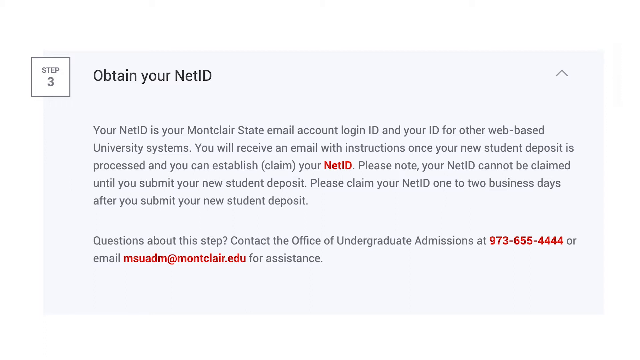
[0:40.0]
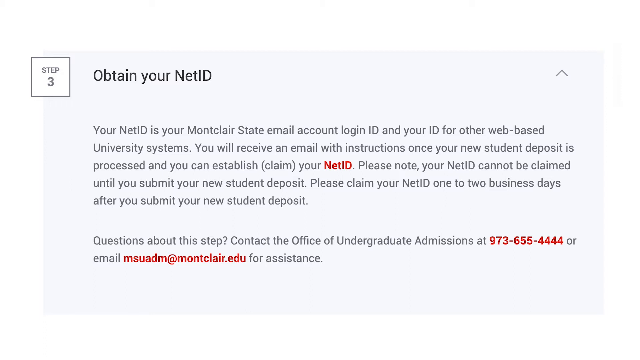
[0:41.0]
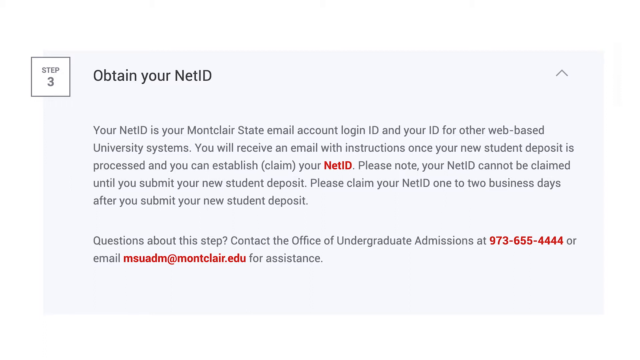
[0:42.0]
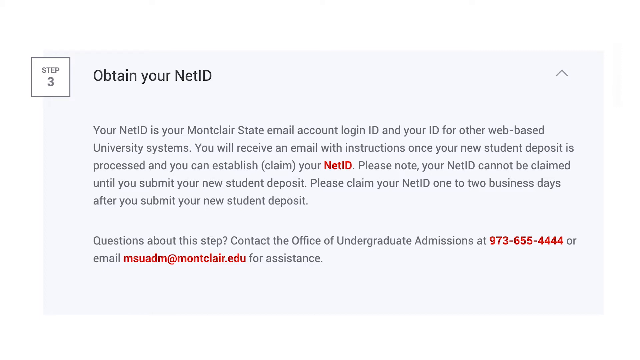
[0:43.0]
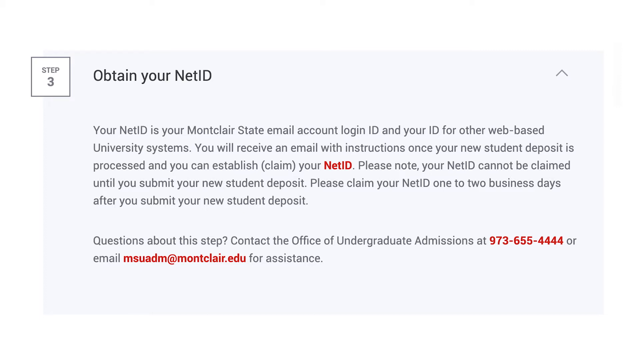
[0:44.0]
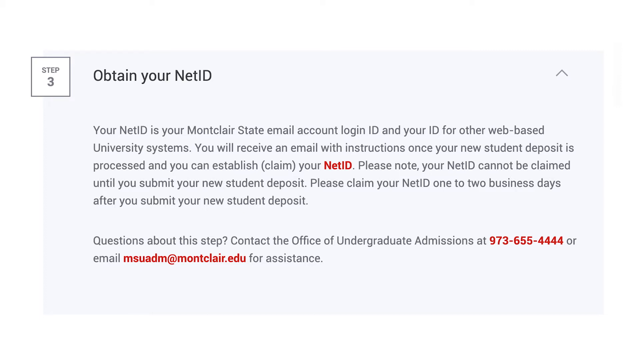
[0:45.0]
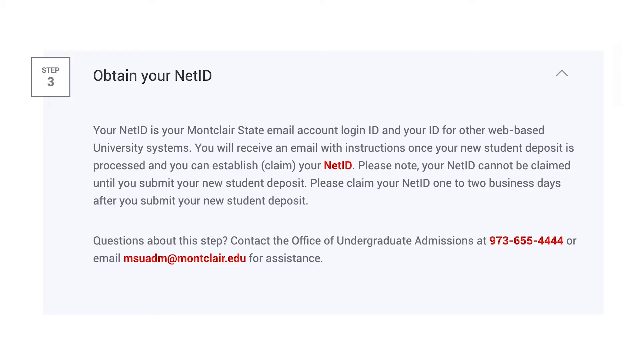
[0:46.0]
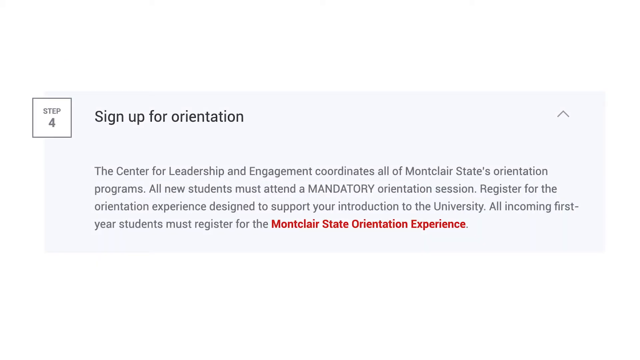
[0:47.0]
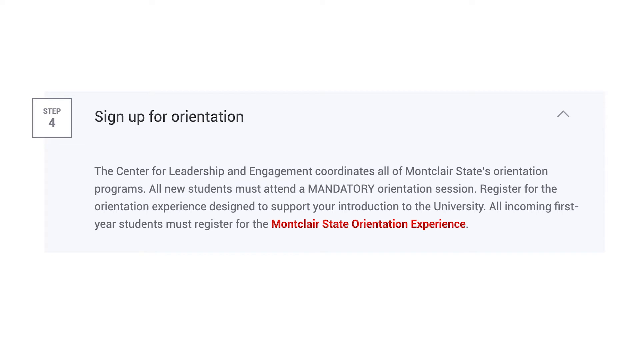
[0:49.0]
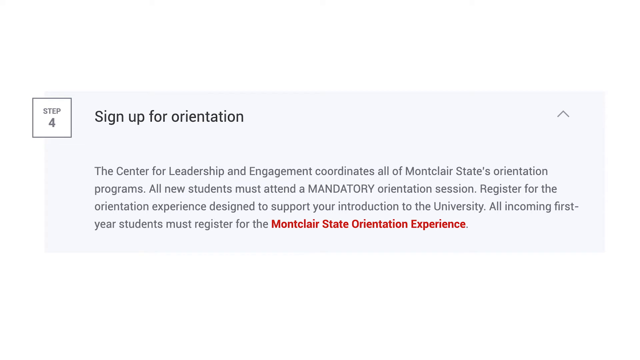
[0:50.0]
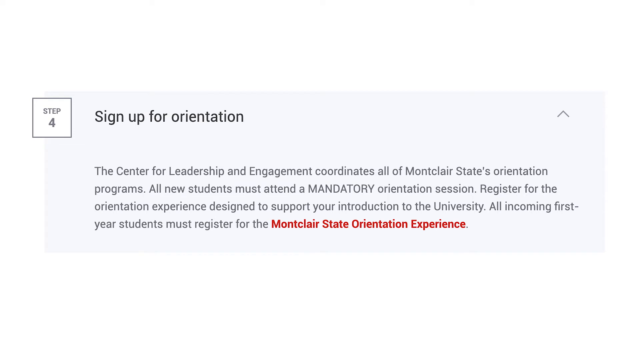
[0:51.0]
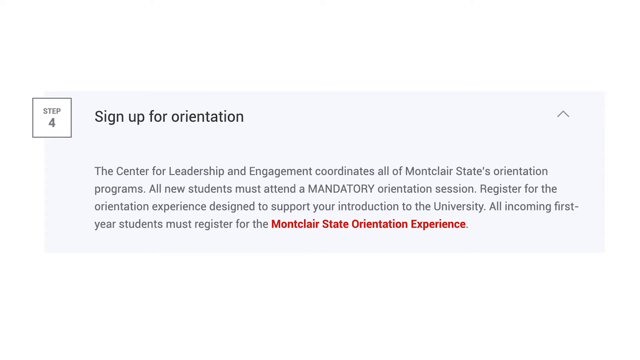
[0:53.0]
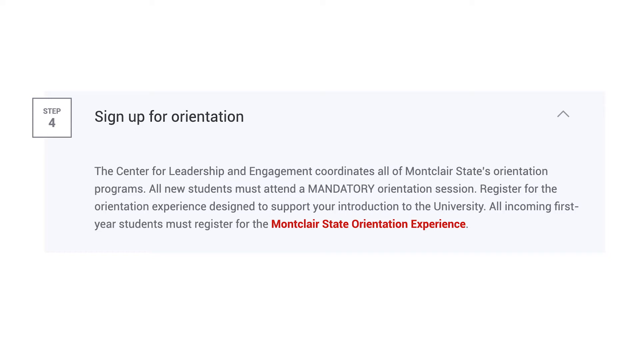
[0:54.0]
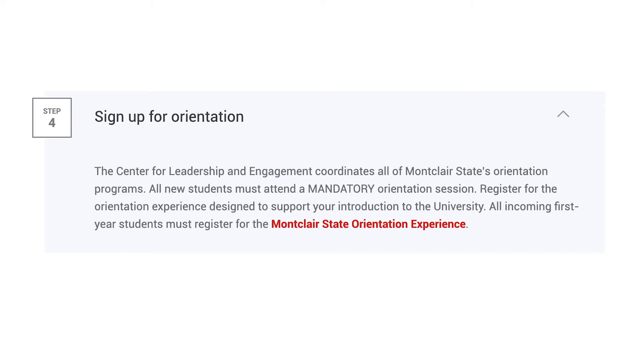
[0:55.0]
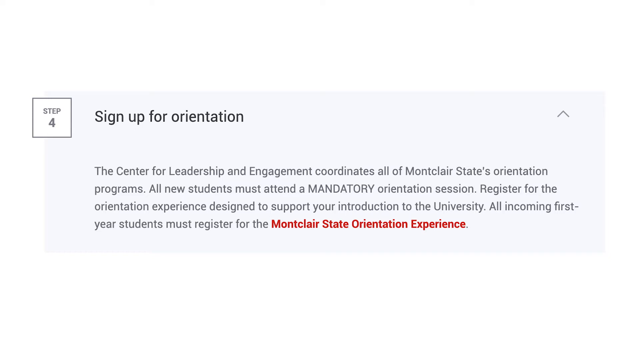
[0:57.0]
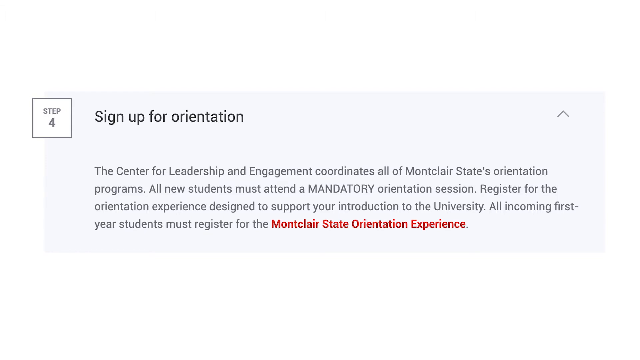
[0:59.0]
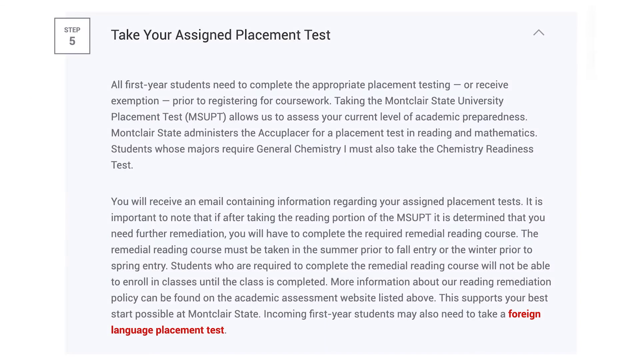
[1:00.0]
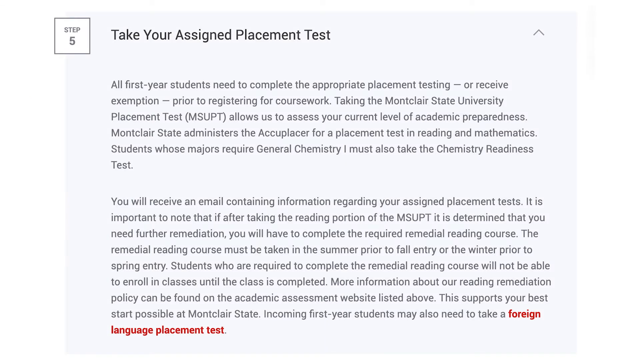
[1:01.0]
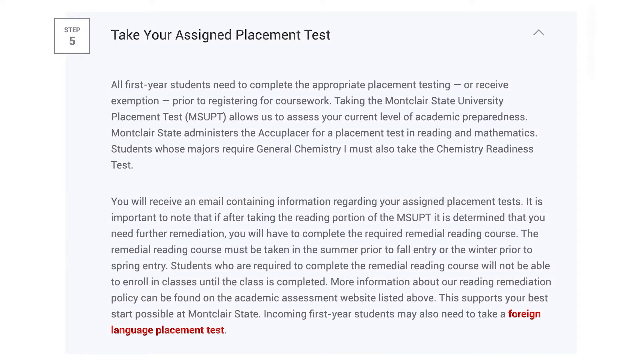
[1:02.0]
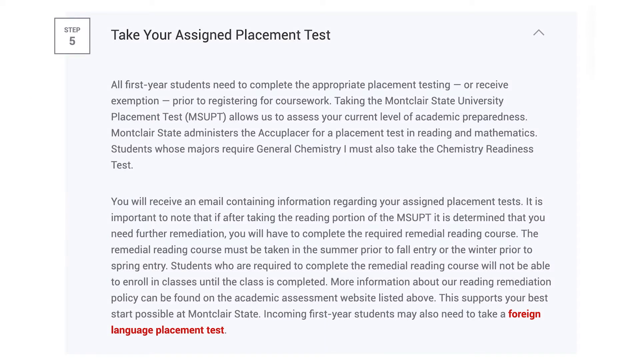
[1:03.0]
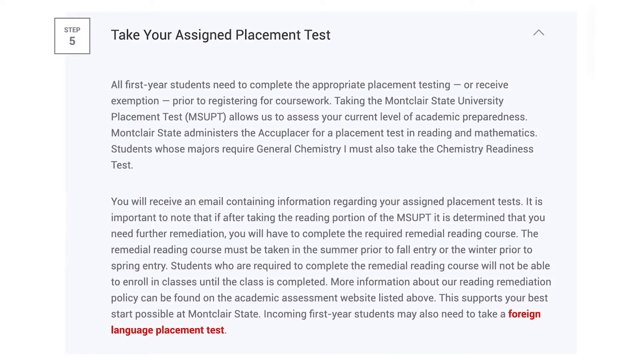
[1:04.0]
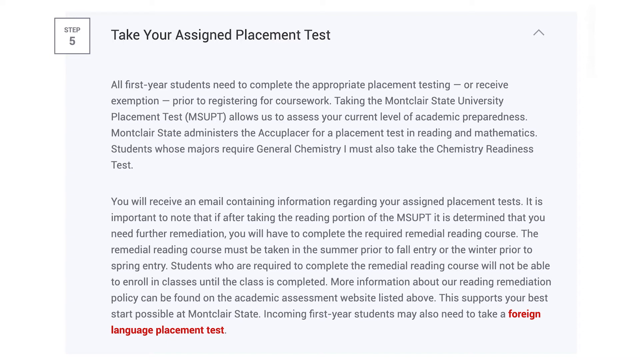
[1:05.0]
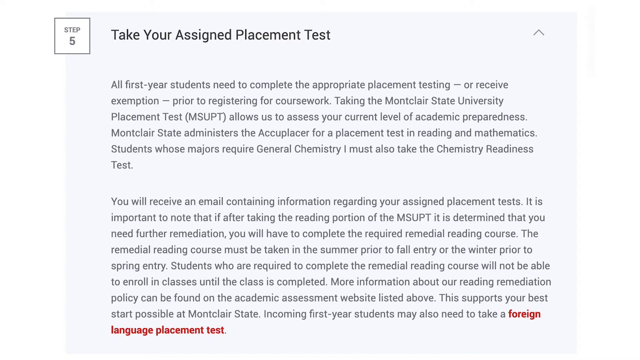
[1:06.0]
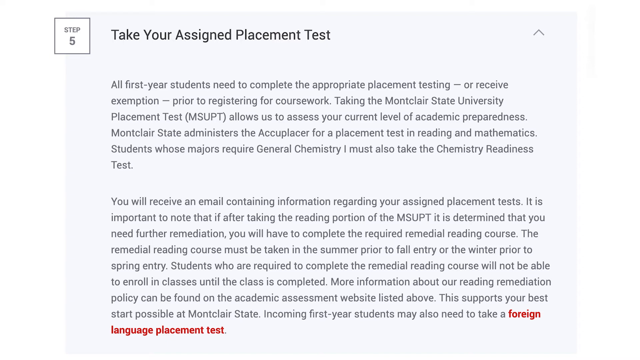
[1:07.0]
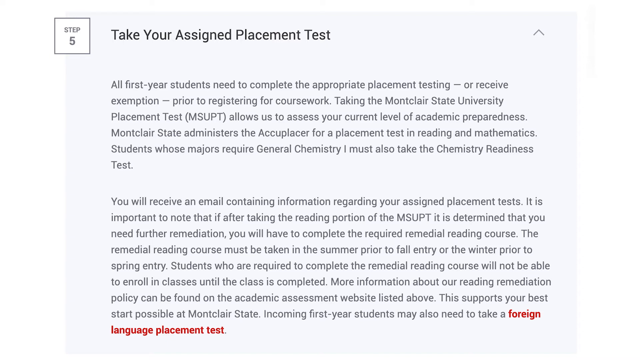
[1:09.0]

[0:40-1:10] Step 4 states that all new students must sign up for orientation, a required event. Step 5 follows, about placement tests: all first-year students need to take tests in reading and math before choosing classes, some students may need extra tests depending on their major, for example general chemistry, and there may also be a foreign language placement test. Students will get an email with instructions about which tests they need to take.